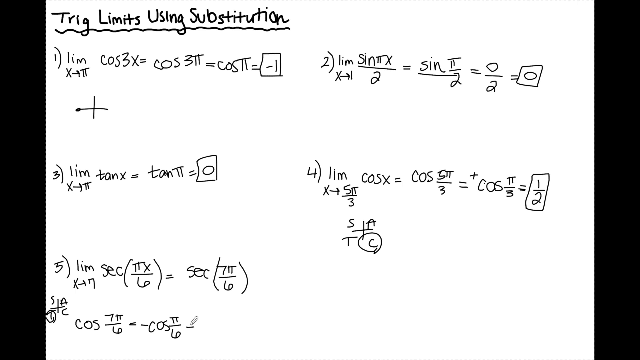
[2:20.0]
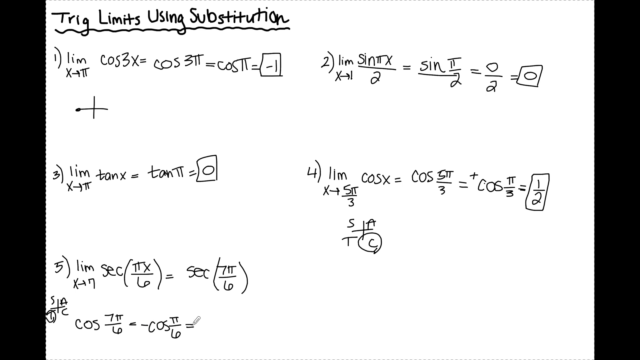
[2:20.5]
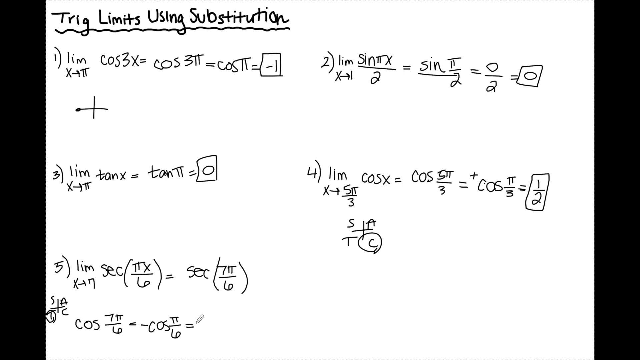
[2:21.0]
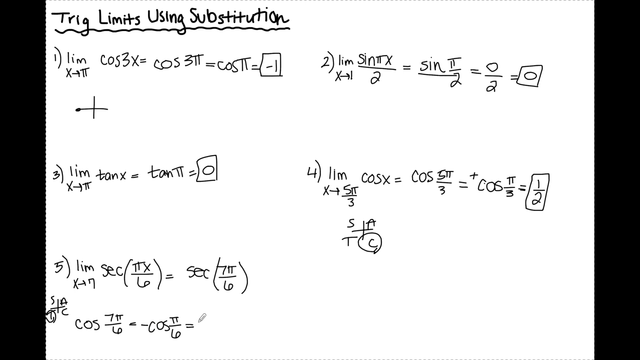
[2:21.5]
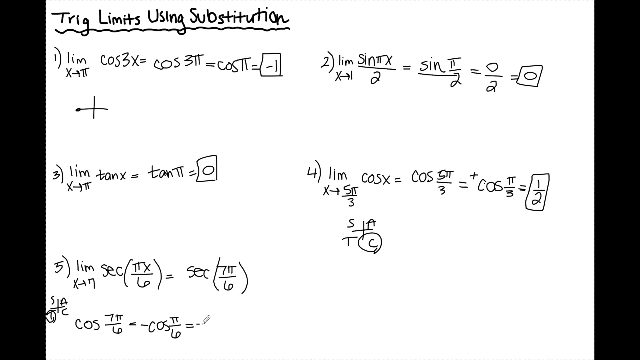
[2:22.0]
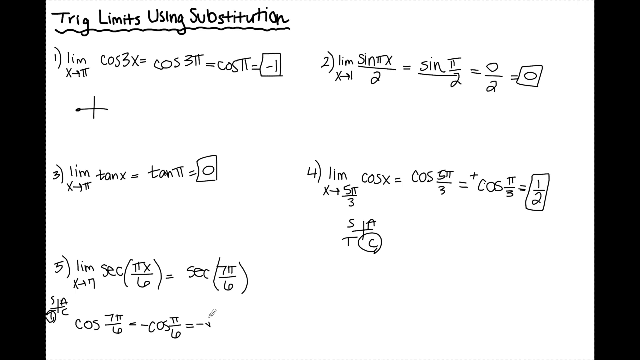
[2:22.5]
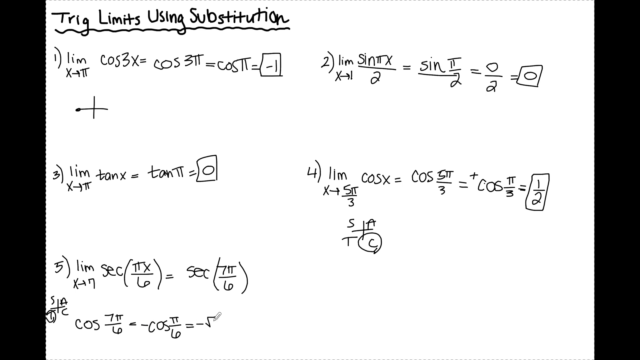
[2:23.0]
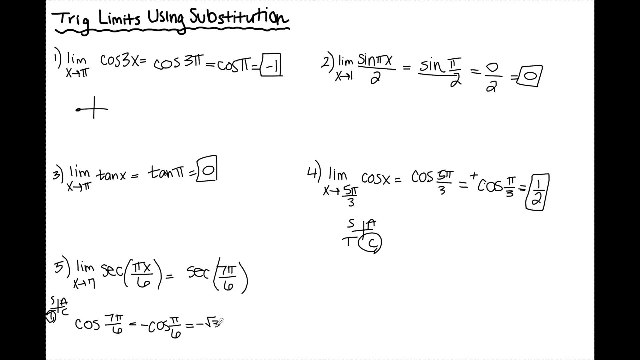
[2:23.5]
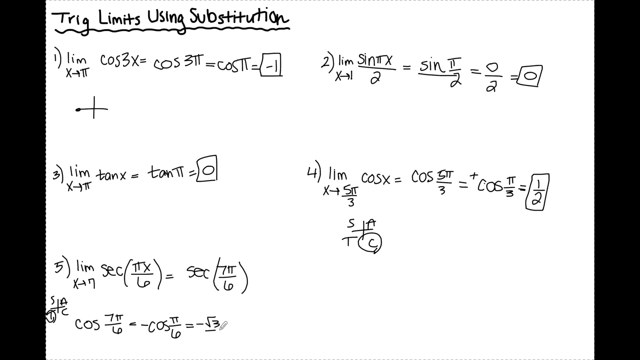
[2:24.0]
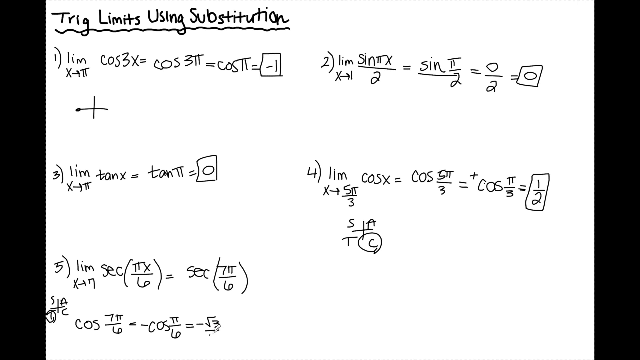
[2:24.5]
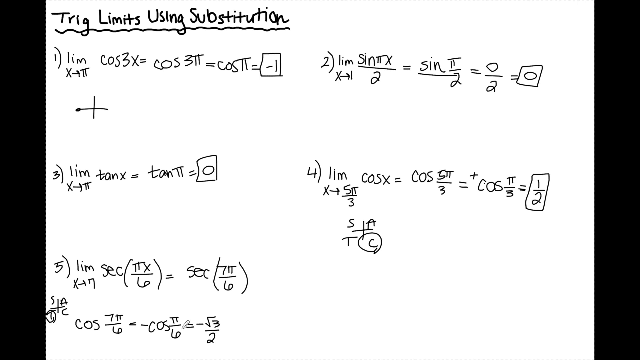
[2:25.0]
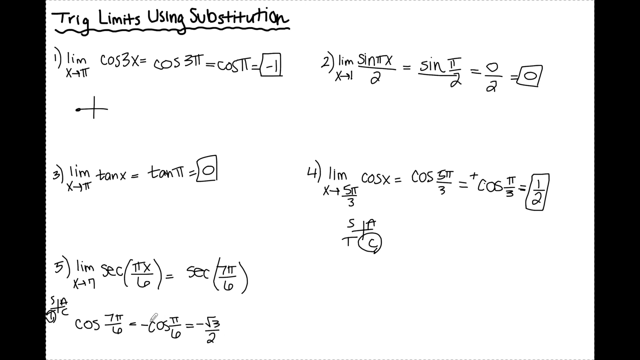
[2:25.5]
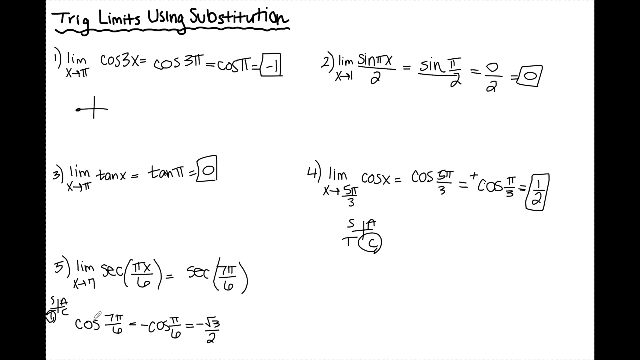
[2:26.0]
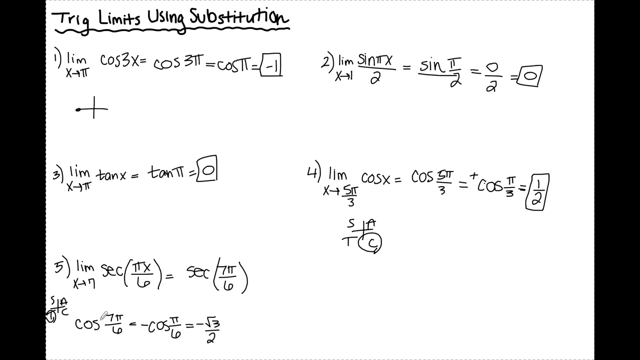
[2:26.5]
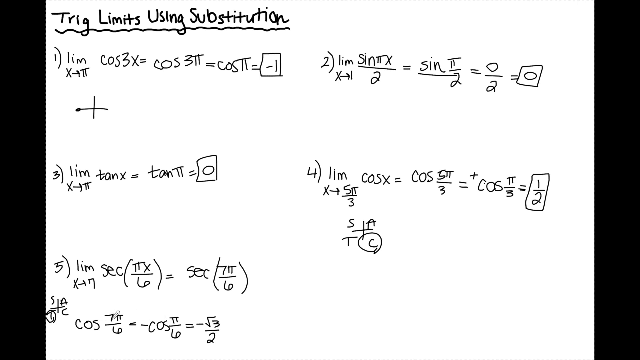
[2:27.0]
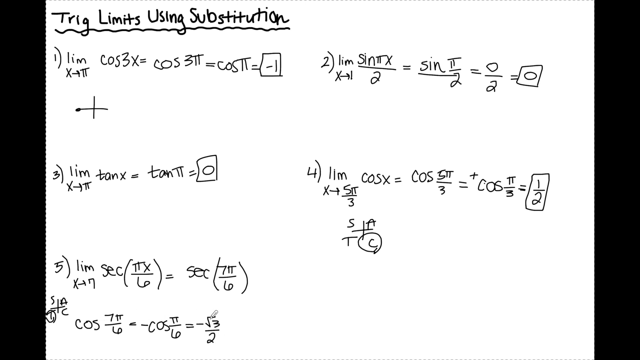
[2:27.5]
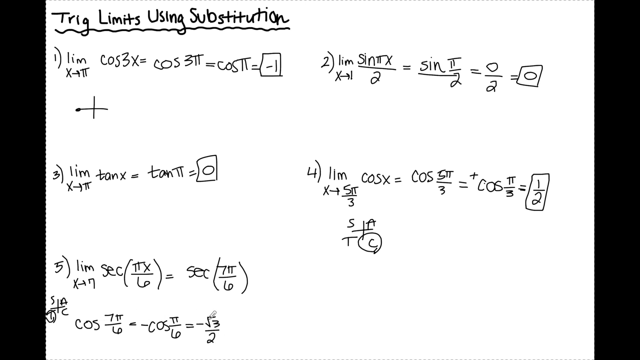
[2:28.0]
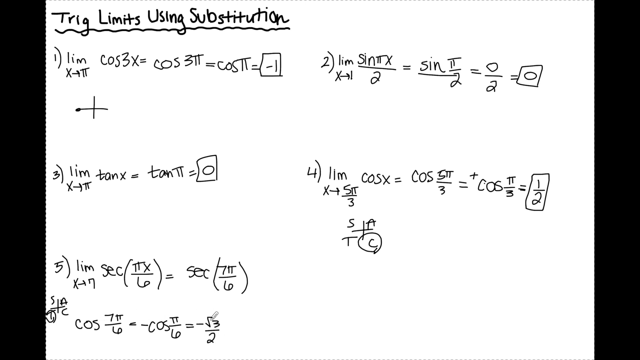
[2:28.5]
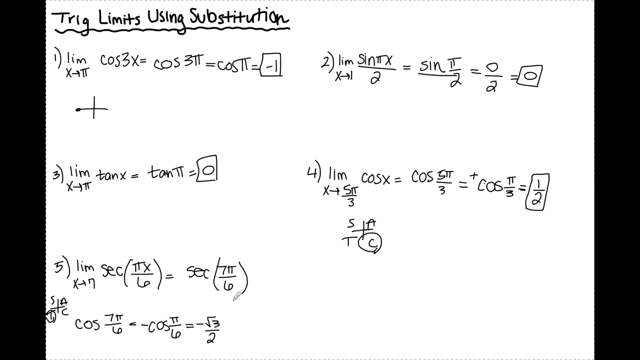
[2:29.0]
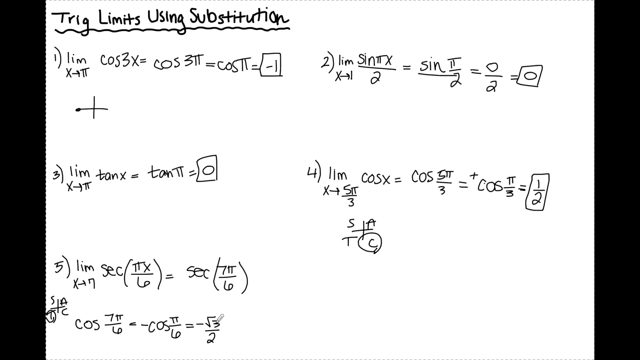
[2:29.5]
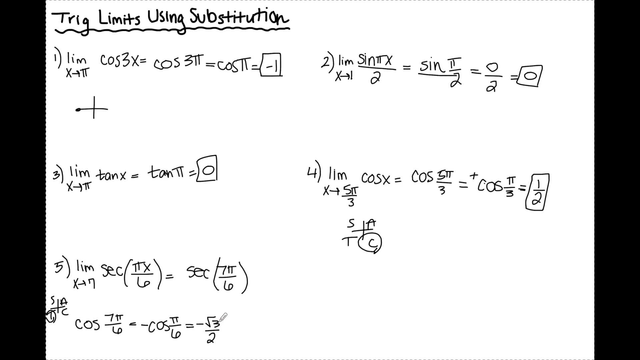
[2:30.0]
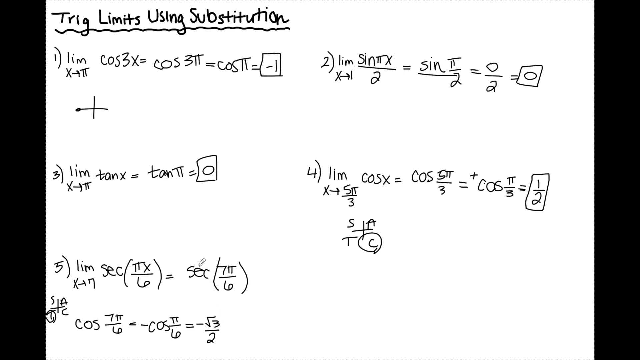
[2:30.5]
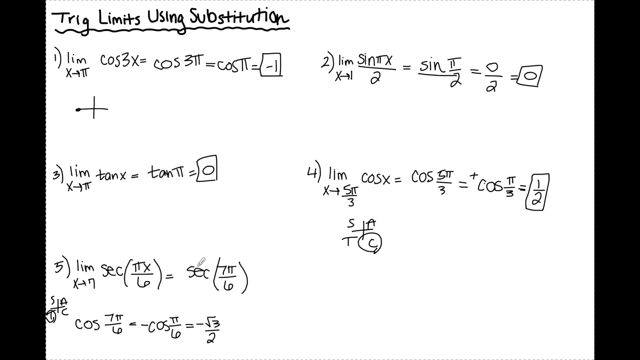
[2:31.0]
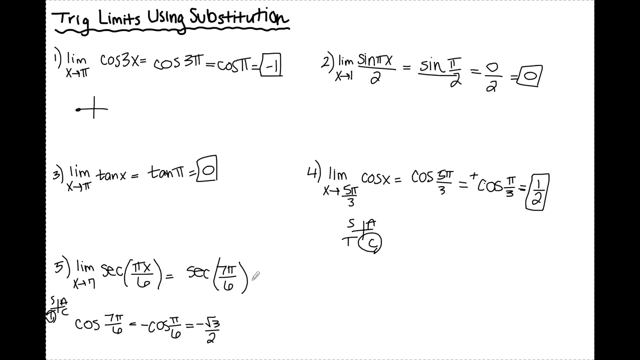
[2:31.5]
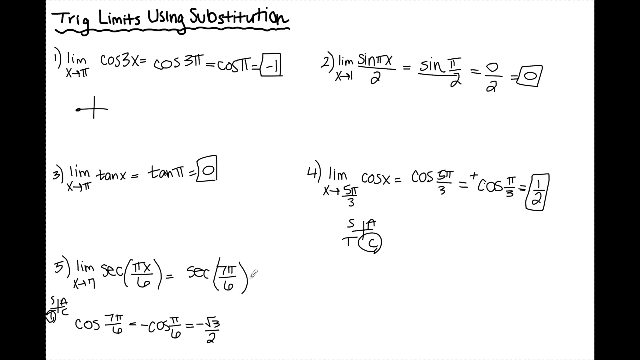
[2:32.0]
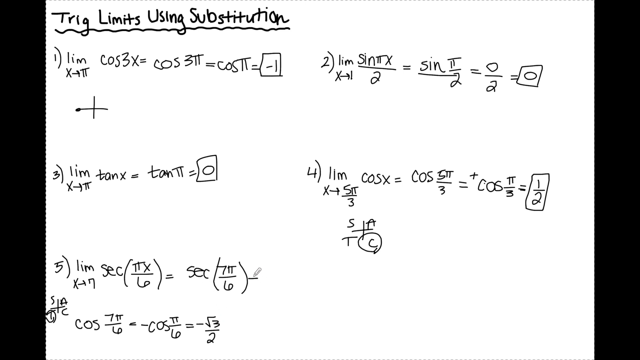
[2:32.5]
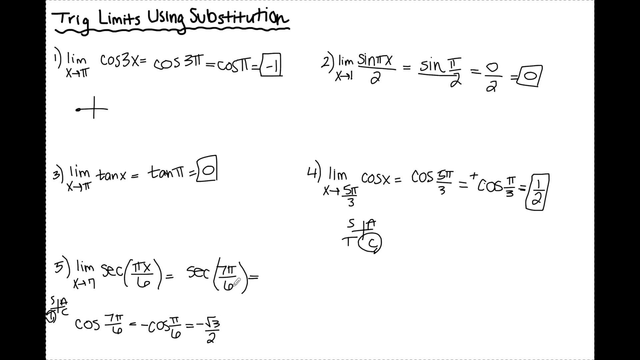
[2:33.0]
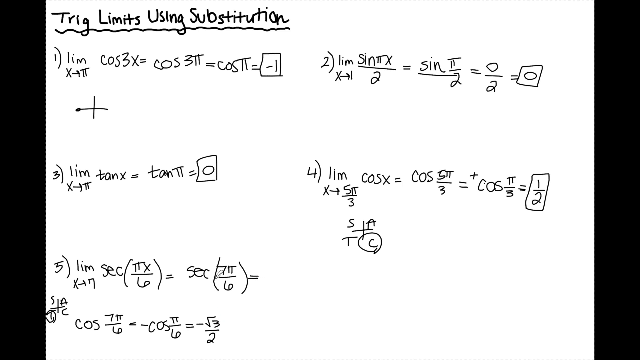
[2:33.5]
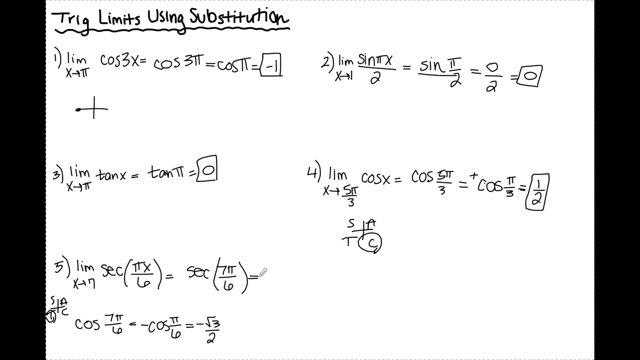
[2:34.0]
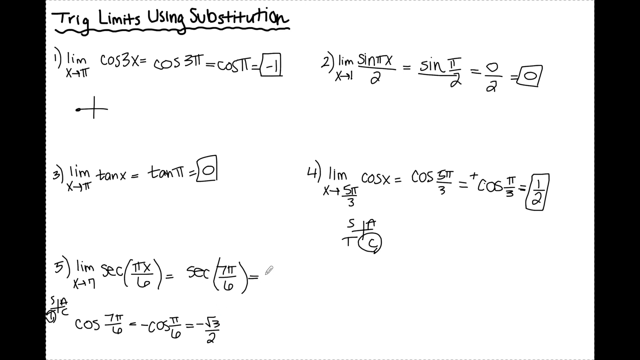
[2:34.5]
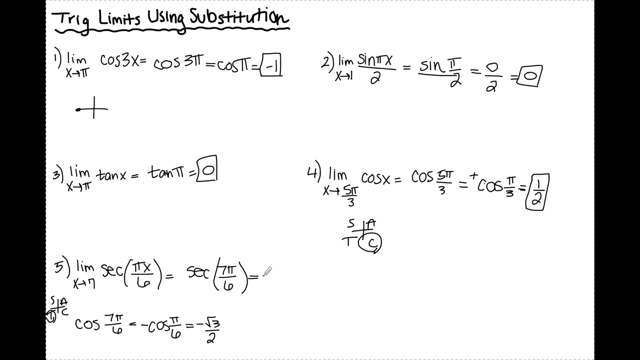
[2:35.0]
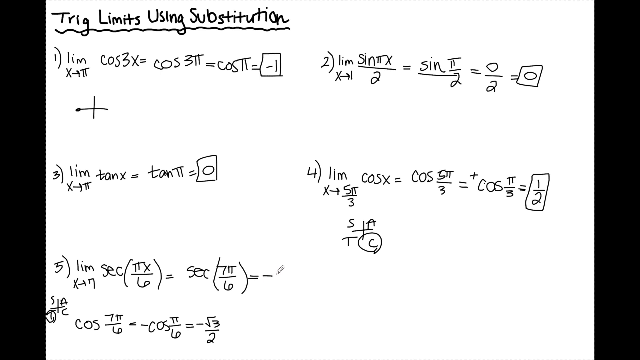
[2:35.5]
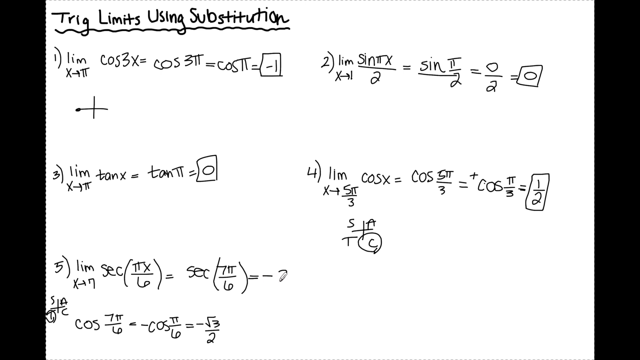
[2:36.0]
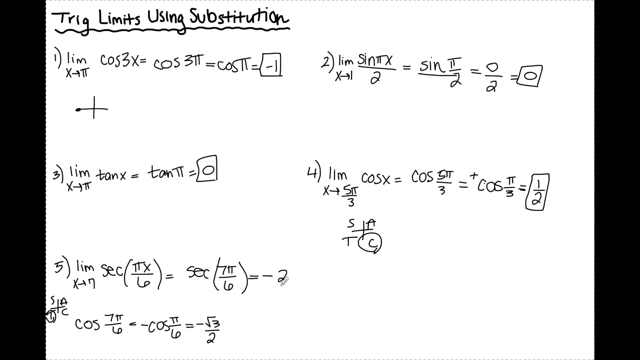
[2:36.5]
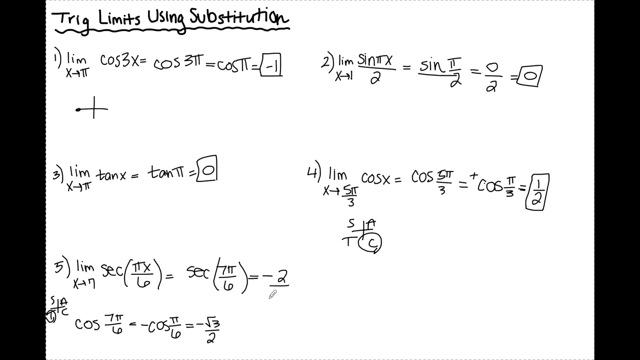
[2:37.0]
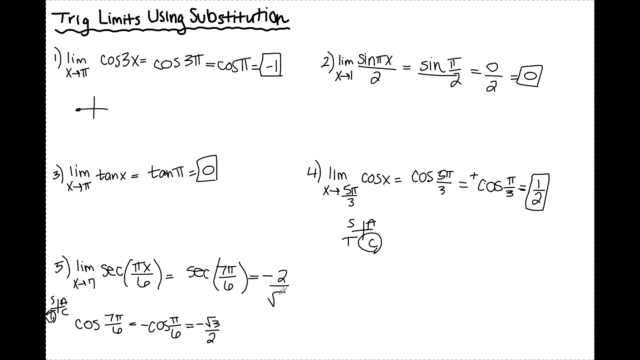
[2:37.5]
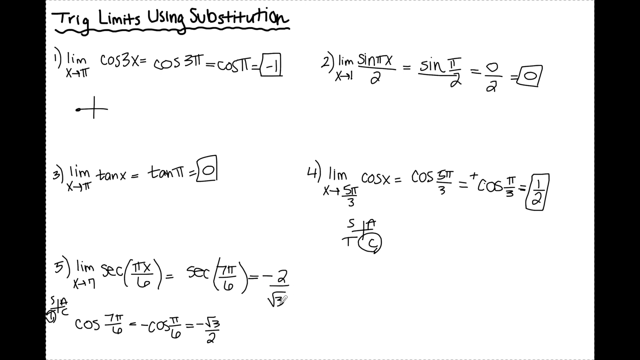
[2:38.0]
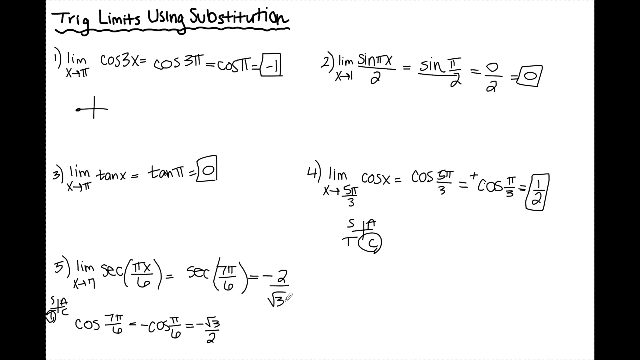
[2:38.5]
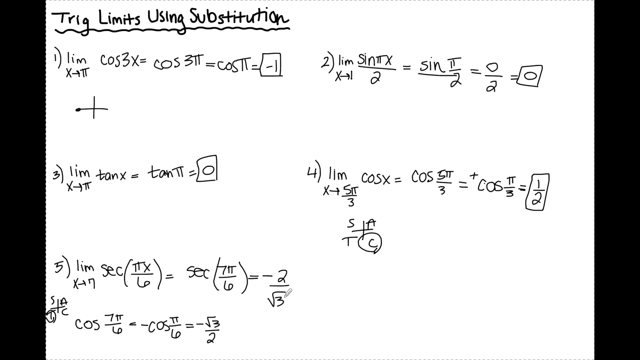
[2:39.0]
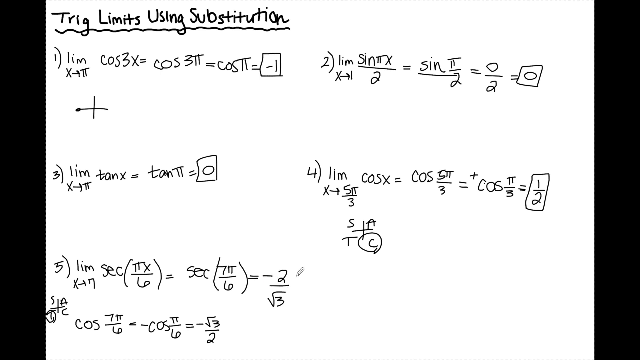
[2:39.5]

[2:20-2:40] The cursor completes the equals sign after negative cosine pi divided by 6, hovers, and then writes negative square root 3 divided by 2. It moves back across this simplified equation to the two previous, less simplified equations, hovers around the first section of the equation, and then returns to the newly written negative square root 3 divided by 2. It moves back and forth between the negative square root 3 and the equation above, over the SEC section written there. It then moves to the end of that equation, adds an equals sign, and writes negative 2 square root 3, beginning to write another square root as the segment ends.